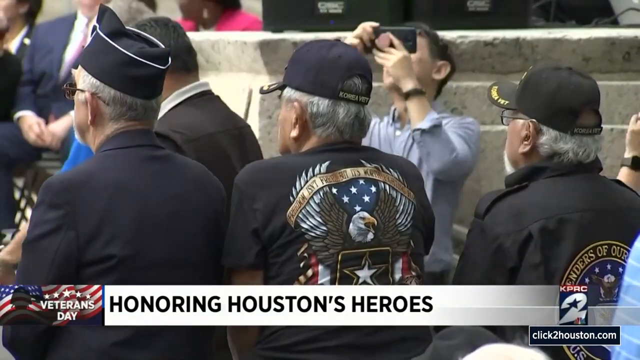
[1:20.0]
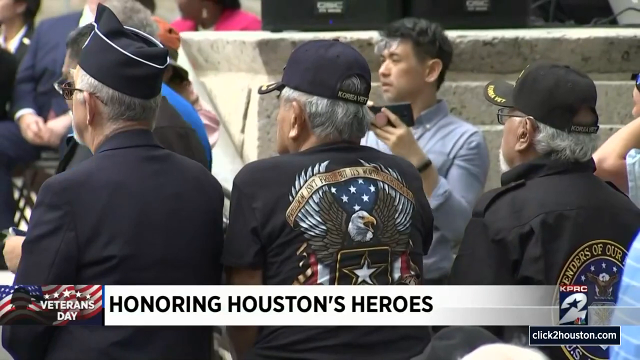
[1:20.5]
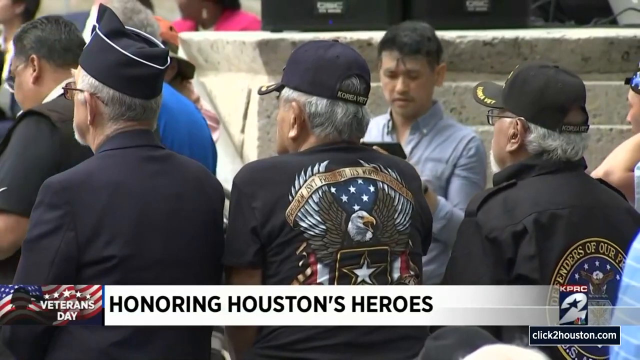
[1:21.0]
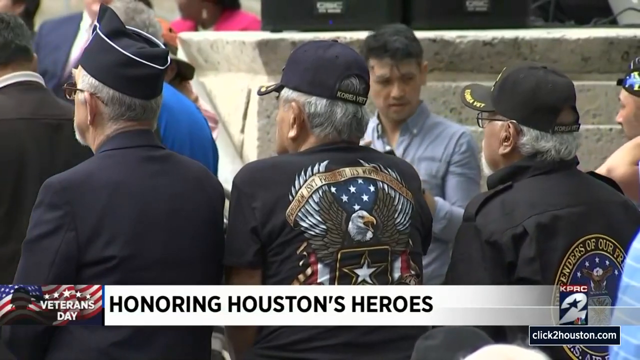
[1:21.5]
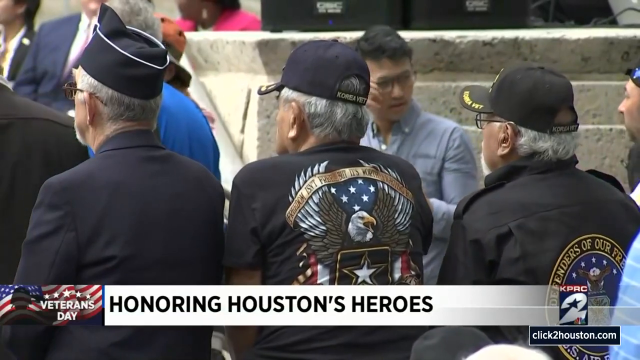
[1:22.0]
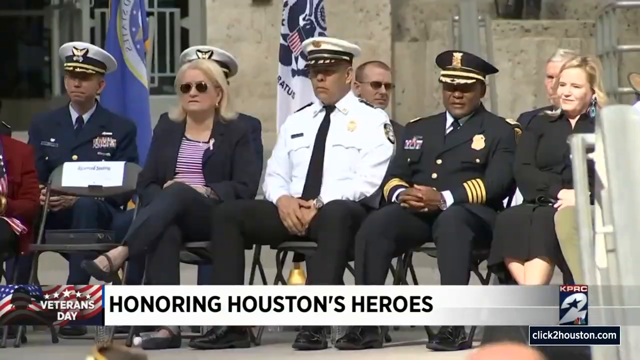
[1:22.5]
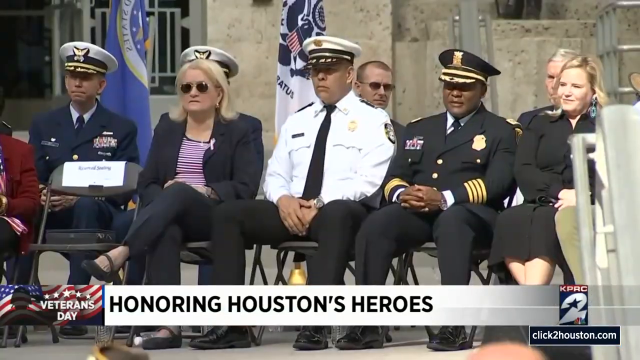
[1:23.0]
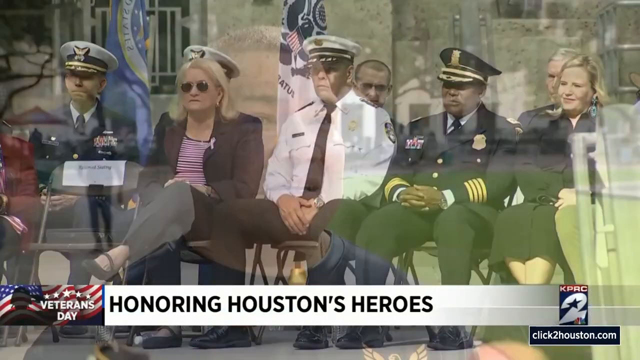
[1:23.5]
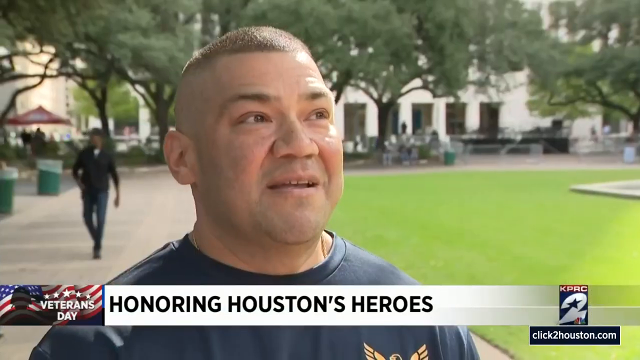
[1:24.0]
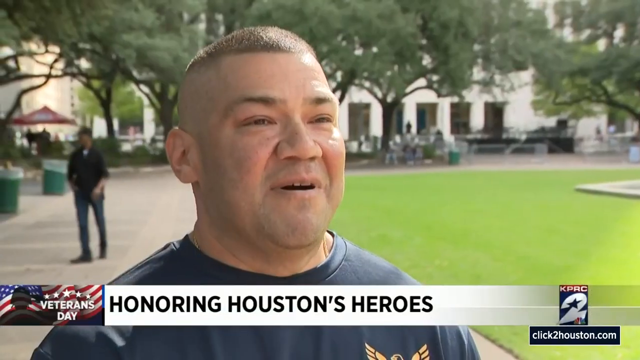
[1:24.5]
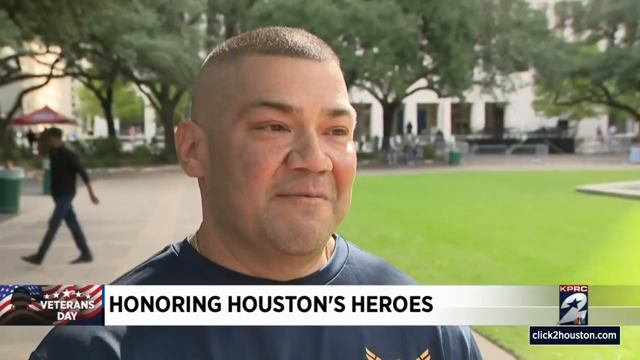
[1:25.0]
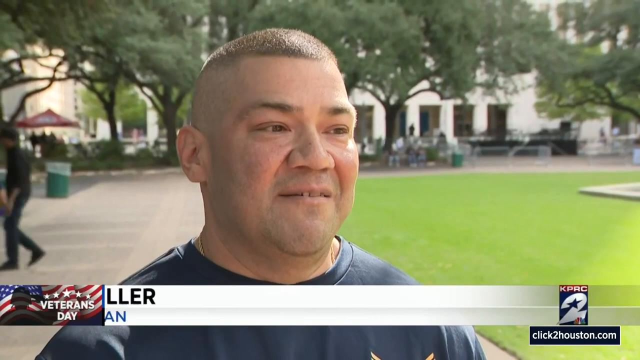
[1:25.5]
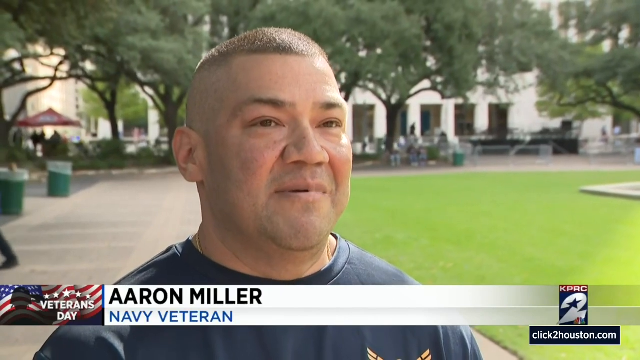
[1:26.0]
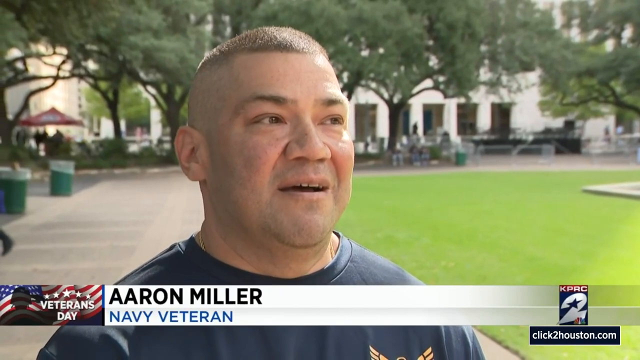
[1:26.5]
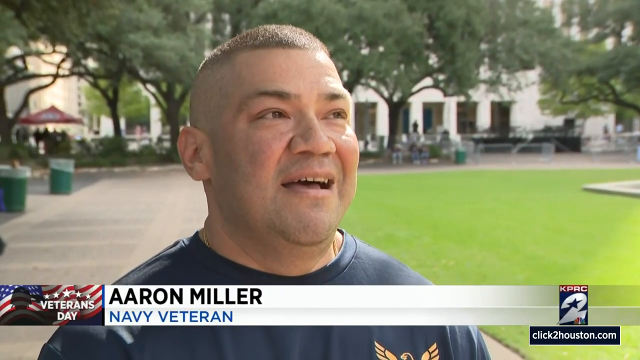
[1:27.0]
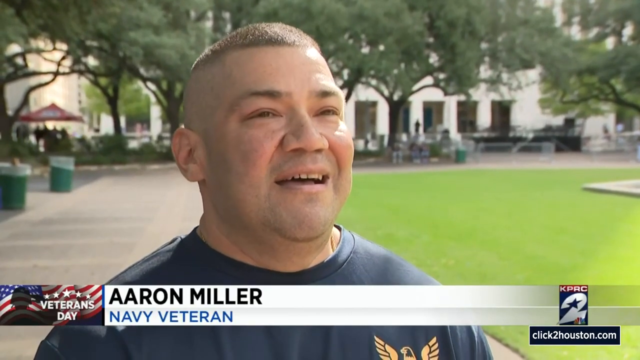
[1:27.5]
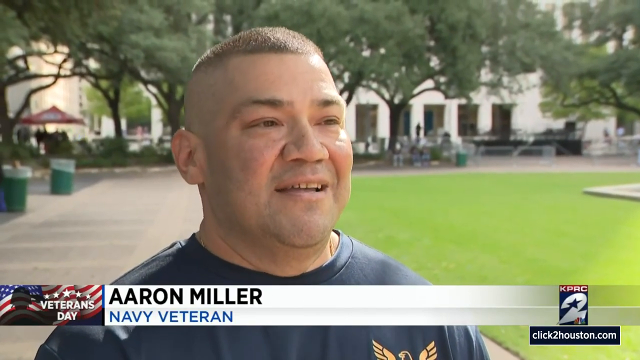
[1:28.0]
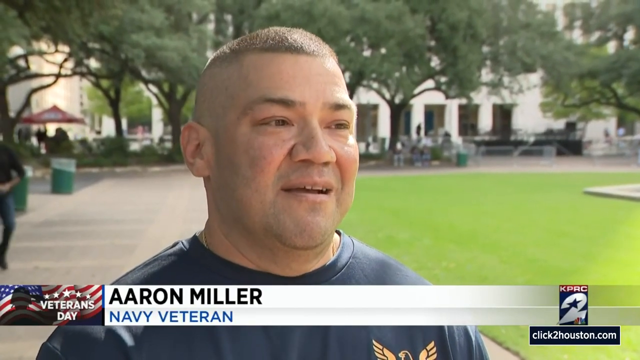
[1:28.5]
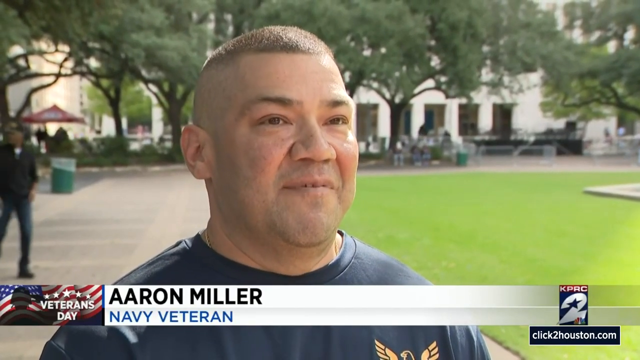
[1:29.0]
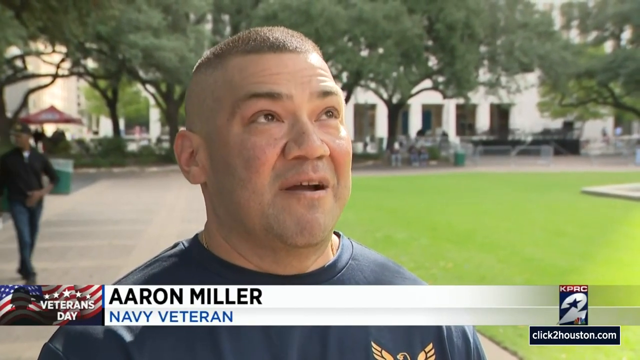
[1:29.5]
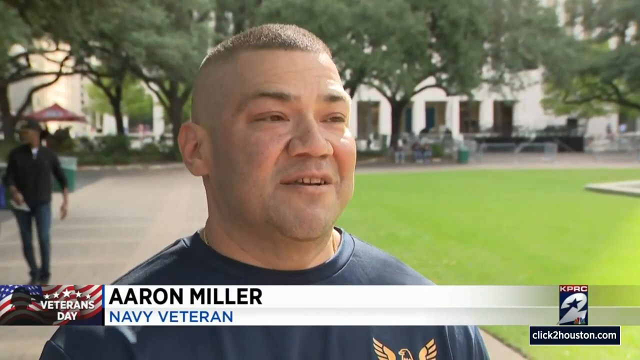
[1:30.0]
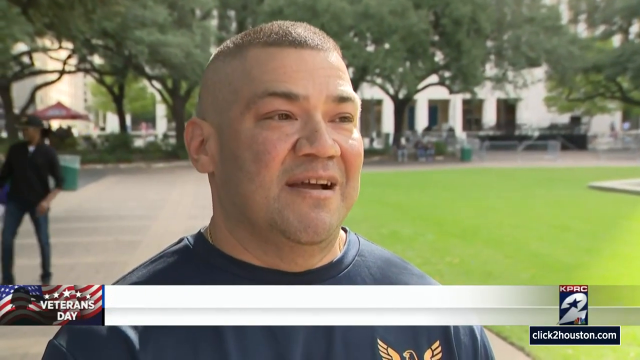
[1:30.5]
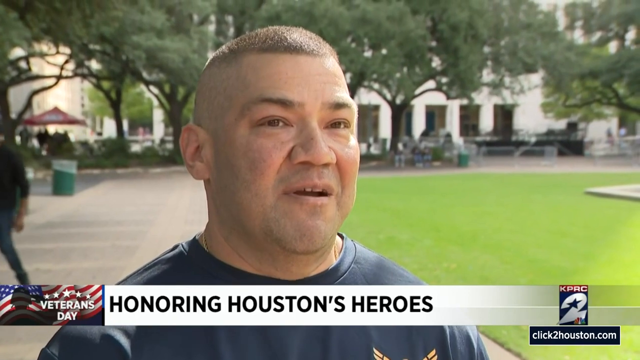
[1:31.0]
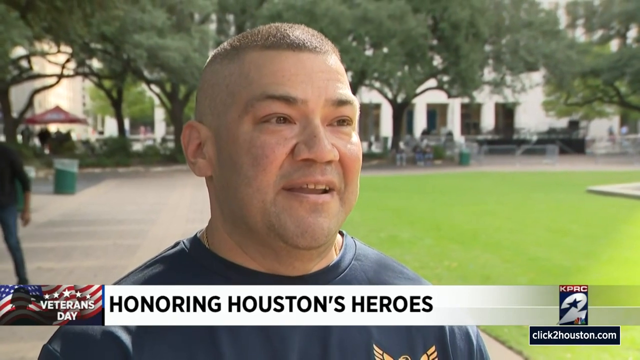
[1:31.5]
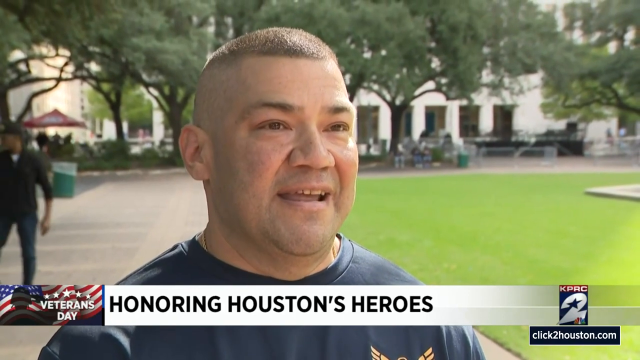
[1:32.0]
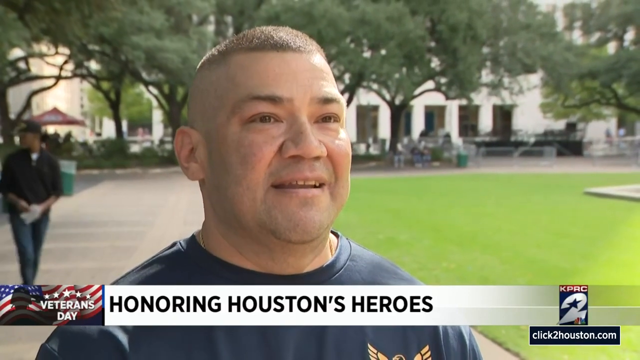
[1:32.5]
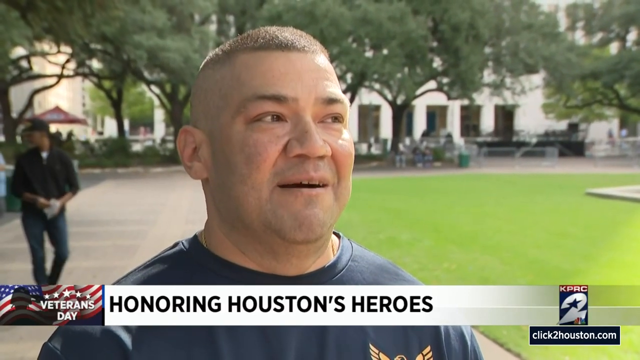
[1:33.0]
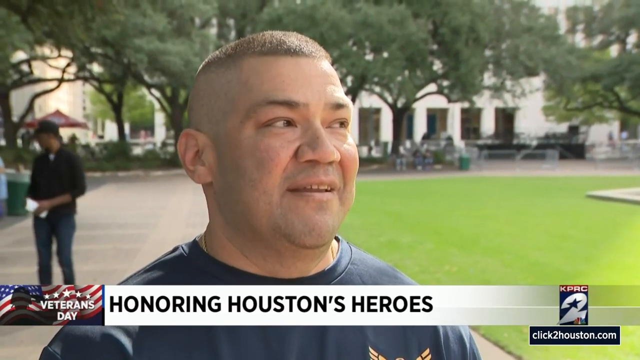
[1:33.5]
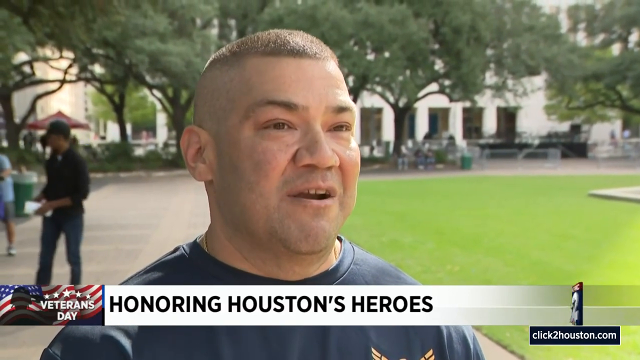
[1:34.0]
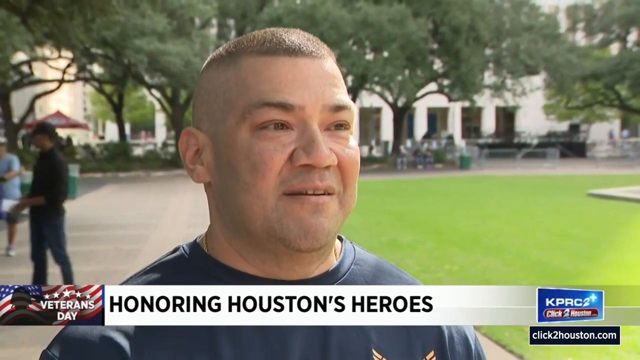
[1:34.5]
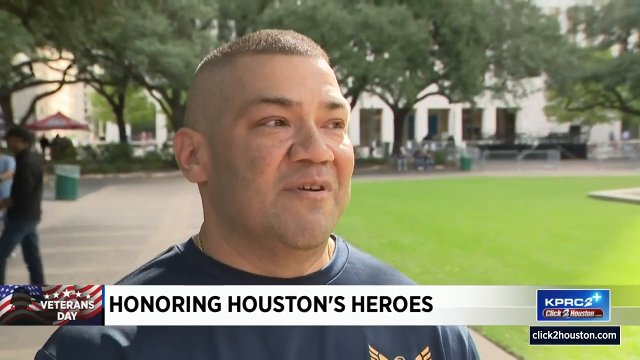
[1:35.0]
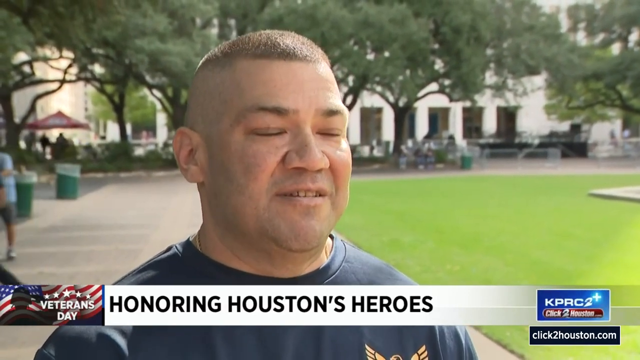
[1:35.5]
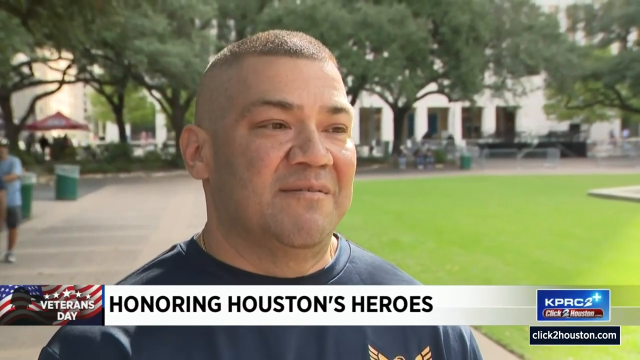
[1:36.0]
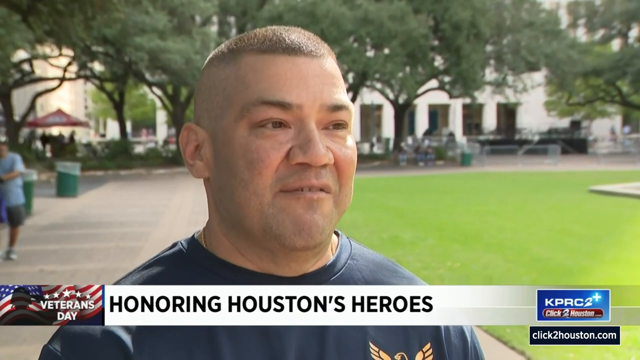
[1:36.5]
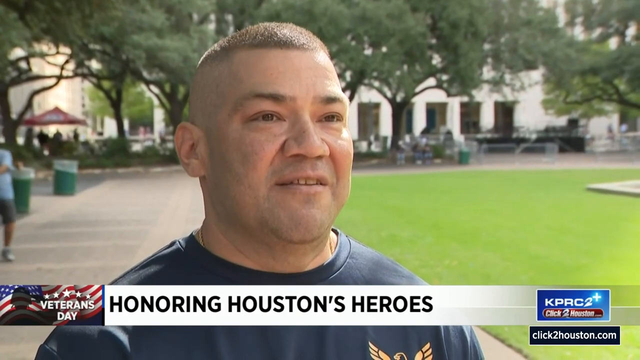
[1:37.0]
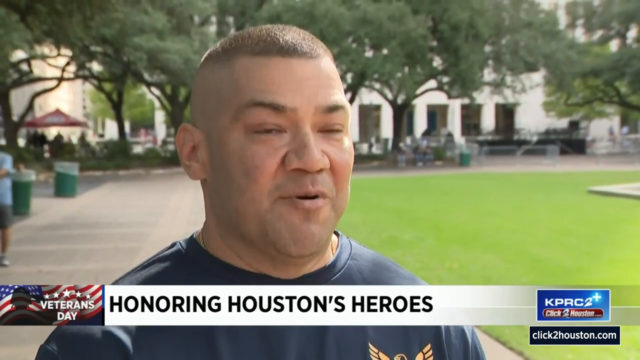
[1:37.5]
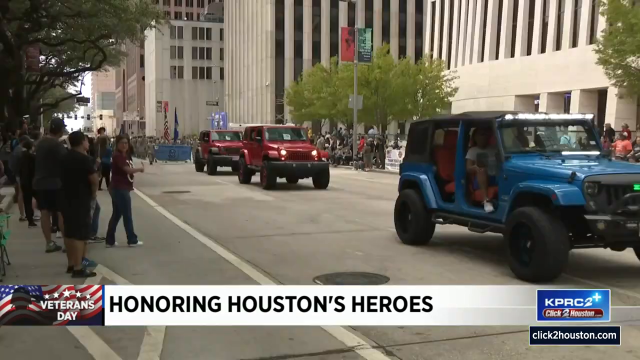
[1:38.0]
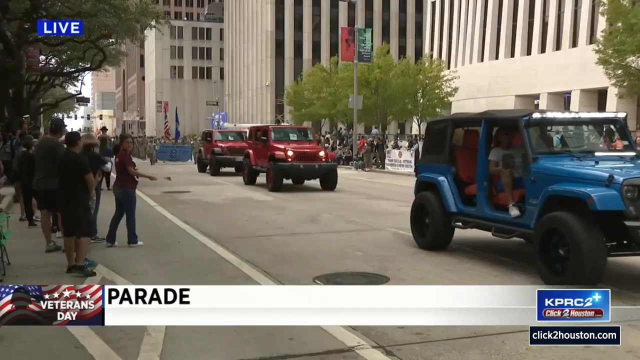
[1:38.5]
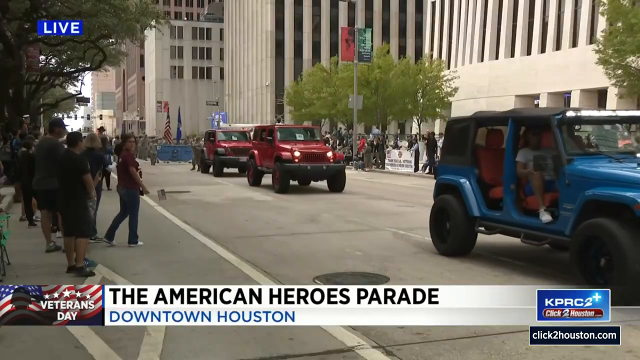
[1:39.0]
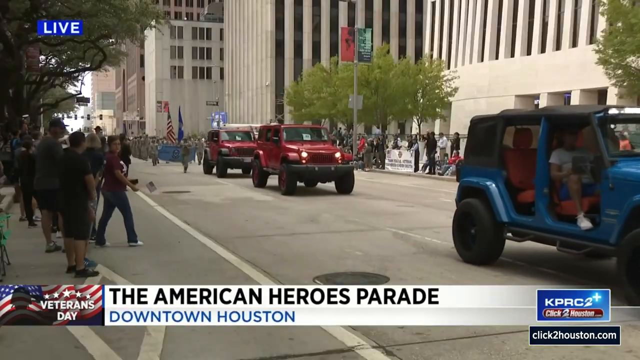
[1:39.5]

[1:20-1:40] The camera shoots from within the crowd, behind three older veterans wearing hats that signify the Korean War and black T-shirts; one wears a black campus jacket. Their clothing is decorated in an Americana style with large eagles, American flags, stars and gold banners mimicking a military uniform. In the far background, a man films the stage with his phone. The video returns to officials sitting together on the stage watching the presentation: three men, two in military dress and one dressed more casually, and a blonde woman who appears to be in her 50s, also dressed casually. The video then transitions to a man being interviewed. He has a close buzzed haircut, appears shorter, maybe around 5'5", is Hispanic, and wears a T-shirt with a military logo on the front; he speaks directly into the camera while the person holding the camera is off screen. Behind him is a large city park with trees and manicured grass, and in the far background are tents, benches and people sitting, as well as people walking. He uses his hands for emphasis, then looks off screen as though toward the person asking the question. A man with a stroller walks by in the background along with multiple other people.